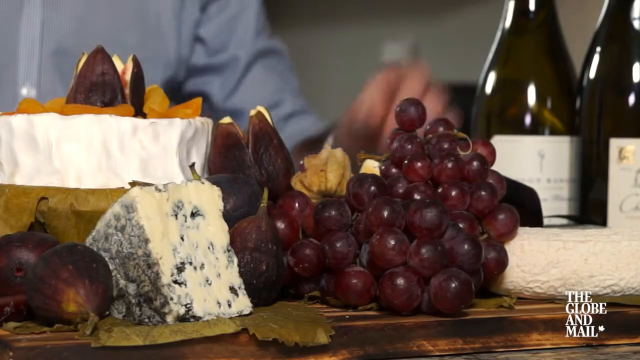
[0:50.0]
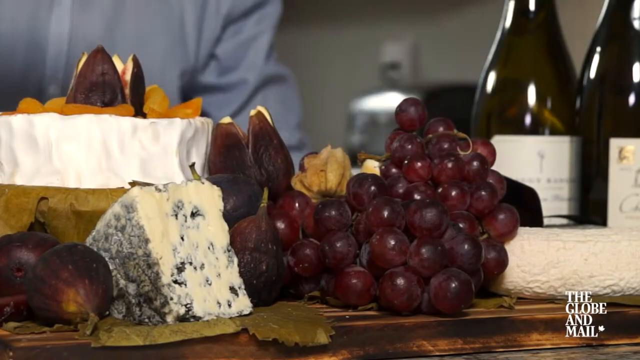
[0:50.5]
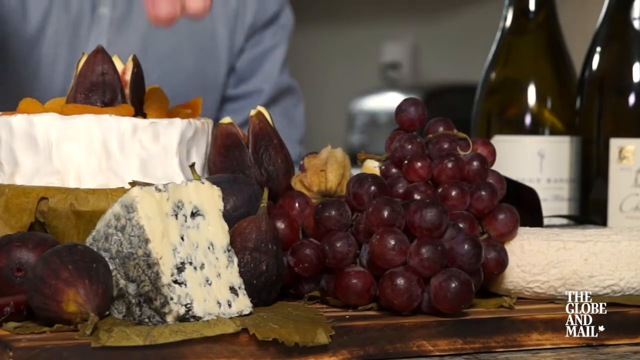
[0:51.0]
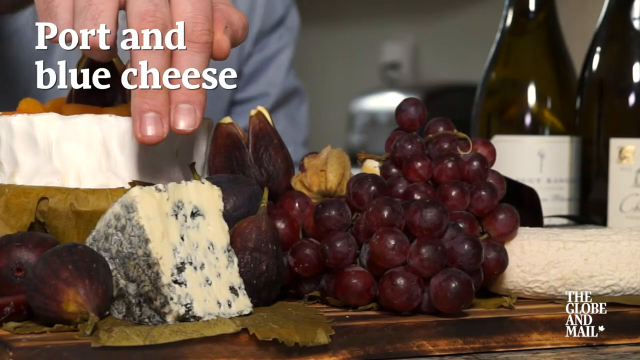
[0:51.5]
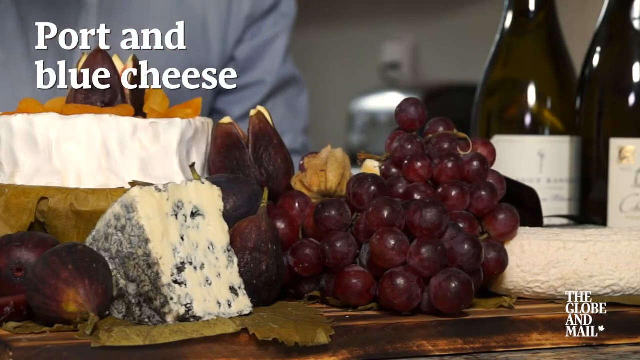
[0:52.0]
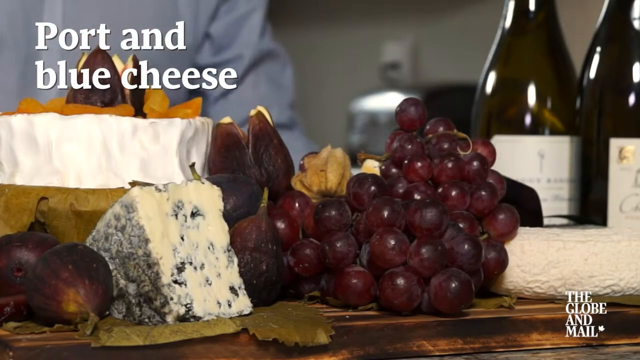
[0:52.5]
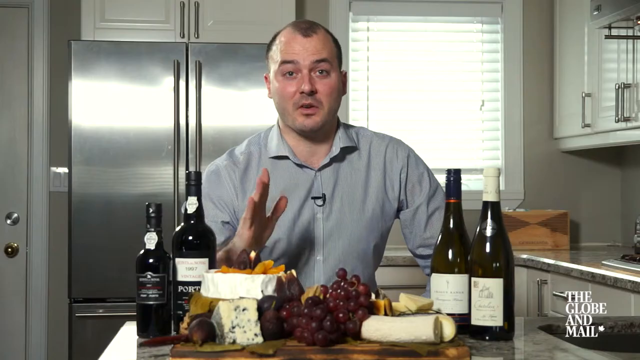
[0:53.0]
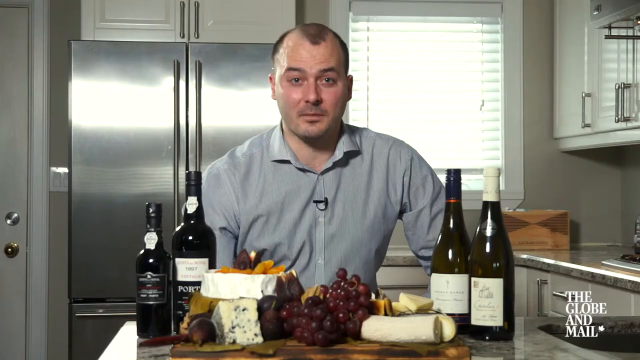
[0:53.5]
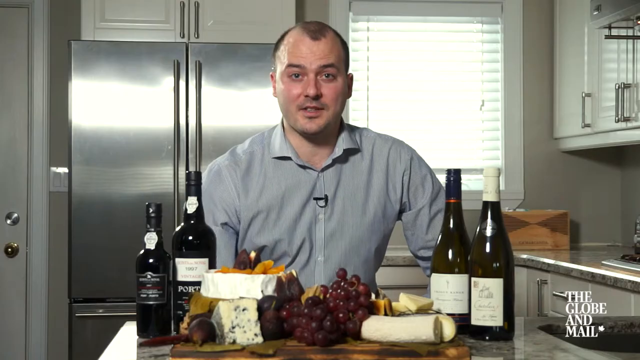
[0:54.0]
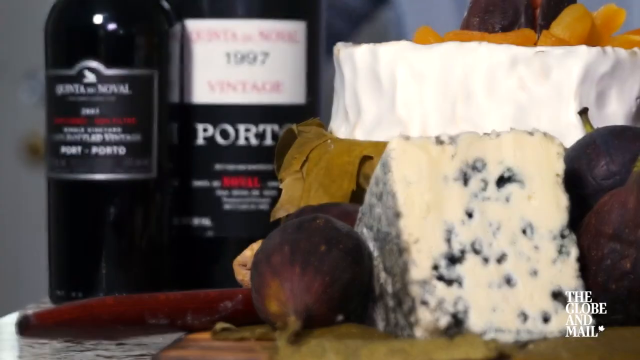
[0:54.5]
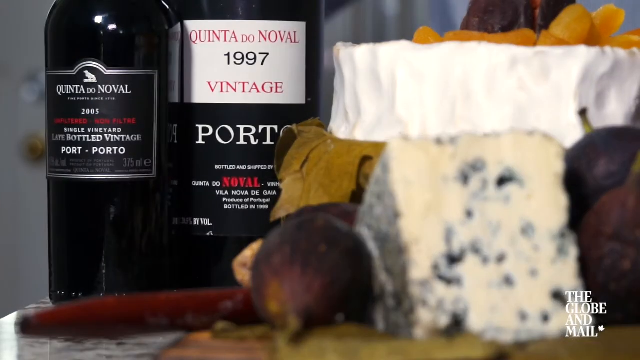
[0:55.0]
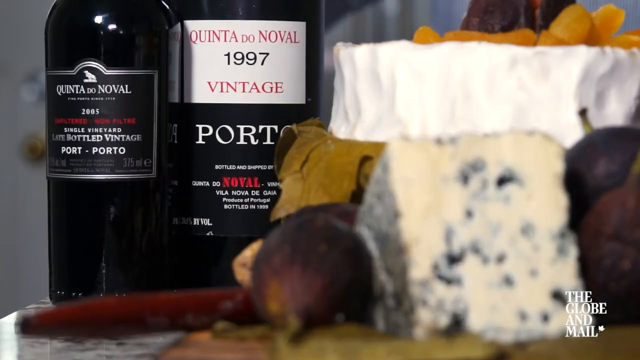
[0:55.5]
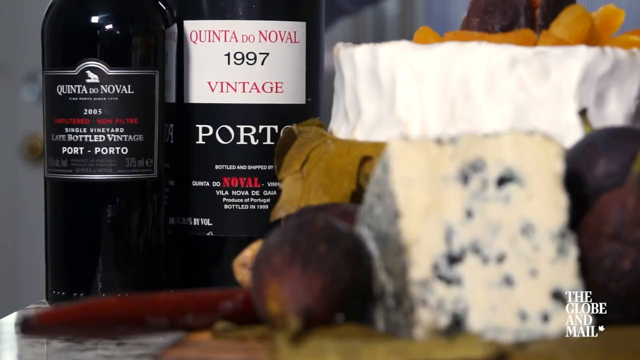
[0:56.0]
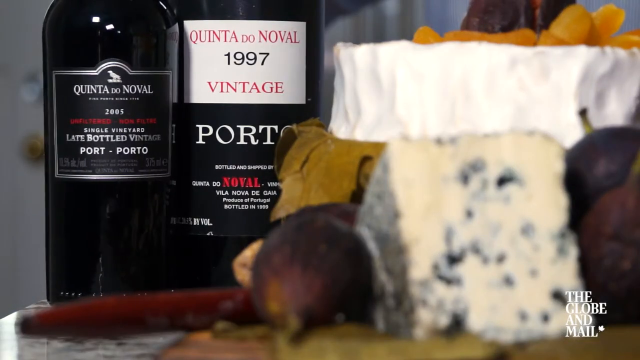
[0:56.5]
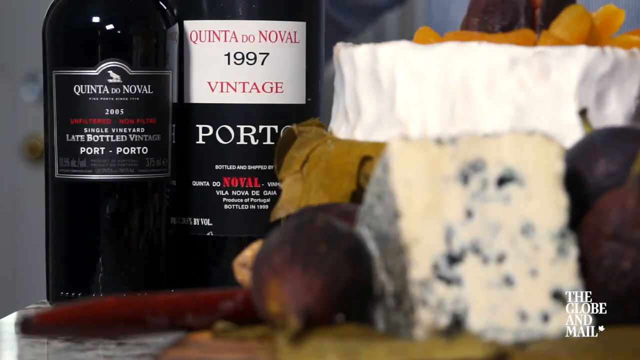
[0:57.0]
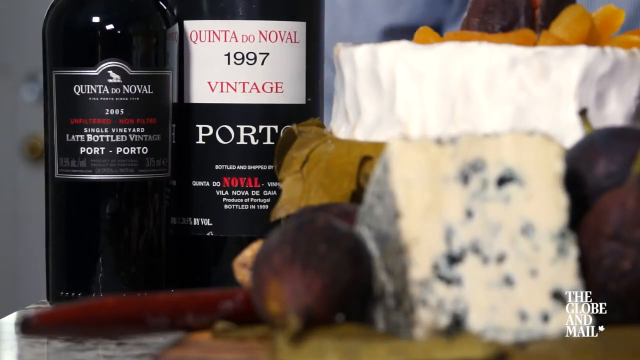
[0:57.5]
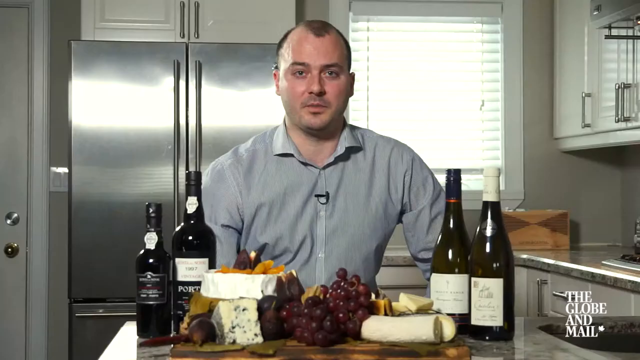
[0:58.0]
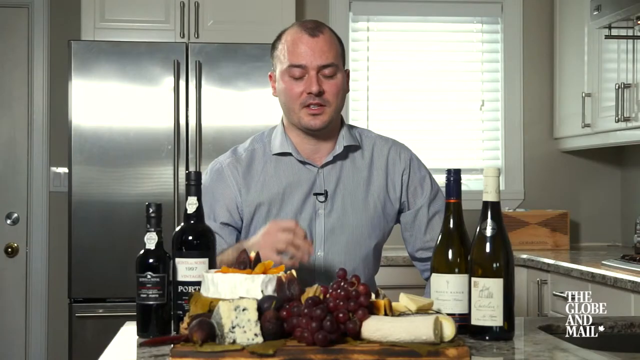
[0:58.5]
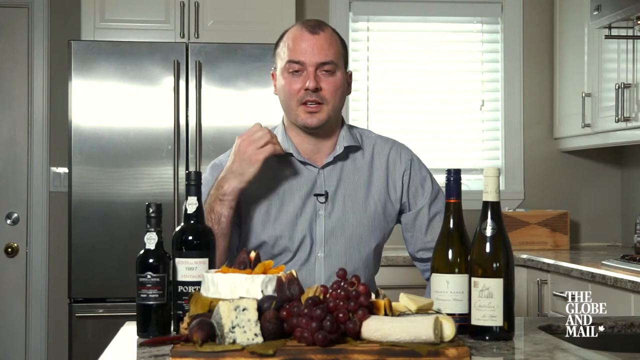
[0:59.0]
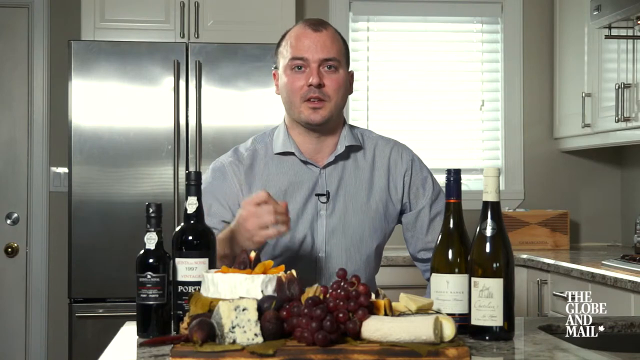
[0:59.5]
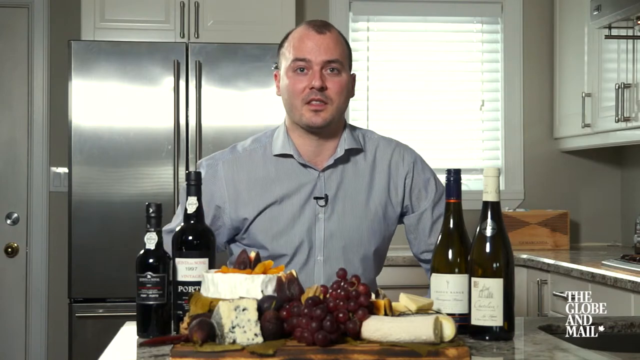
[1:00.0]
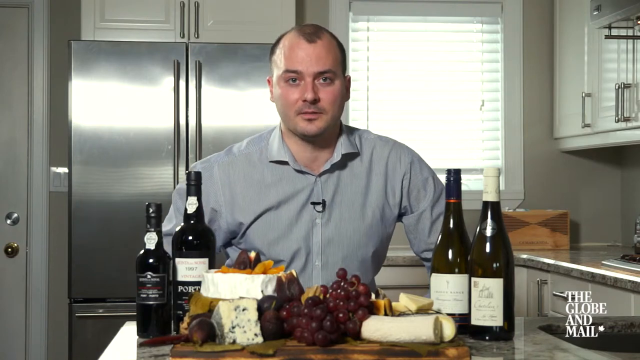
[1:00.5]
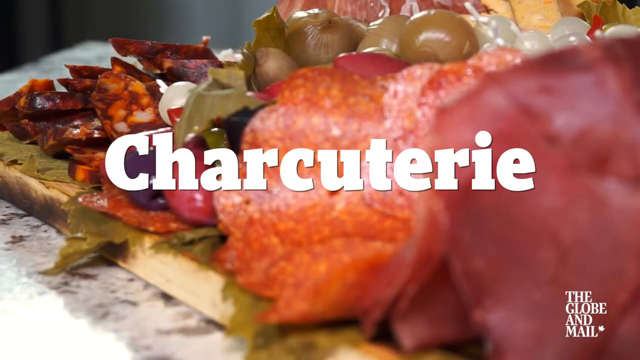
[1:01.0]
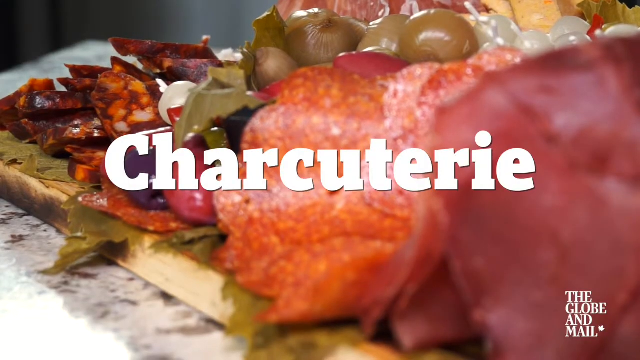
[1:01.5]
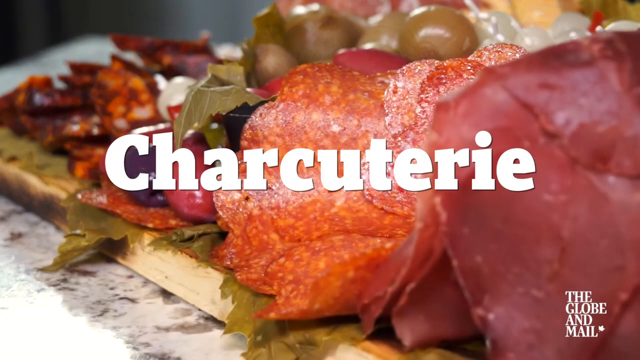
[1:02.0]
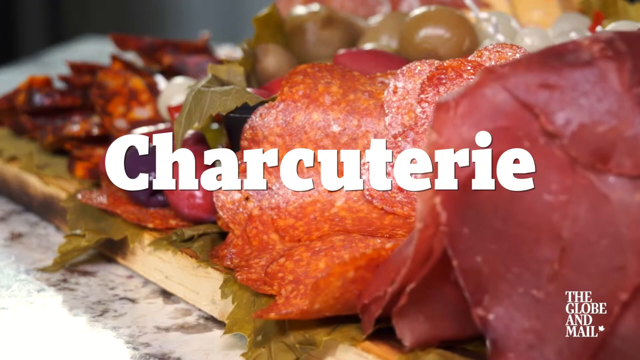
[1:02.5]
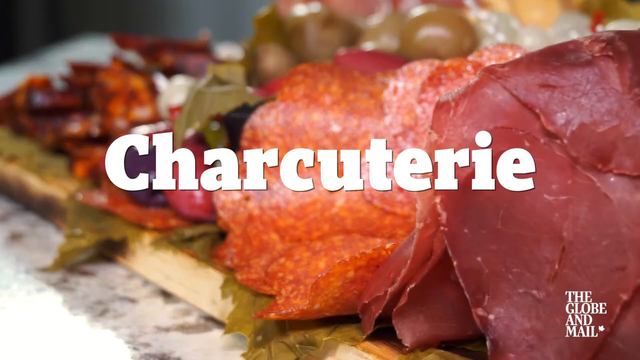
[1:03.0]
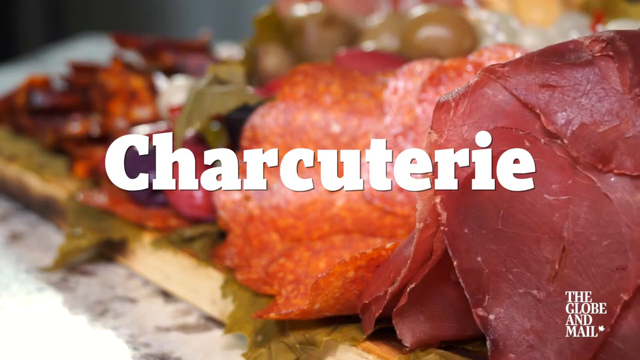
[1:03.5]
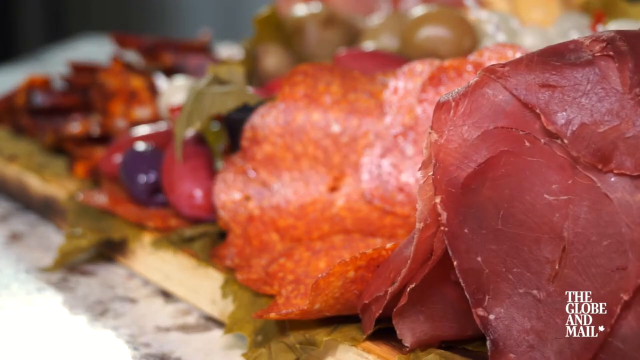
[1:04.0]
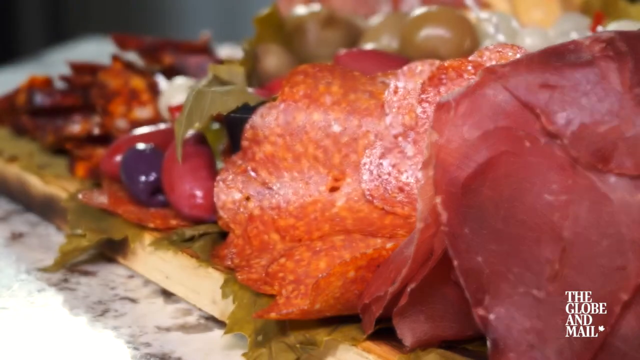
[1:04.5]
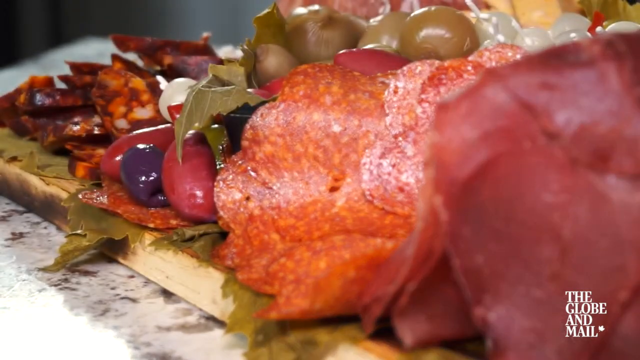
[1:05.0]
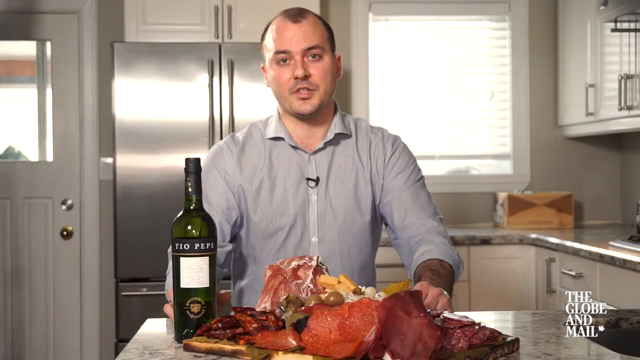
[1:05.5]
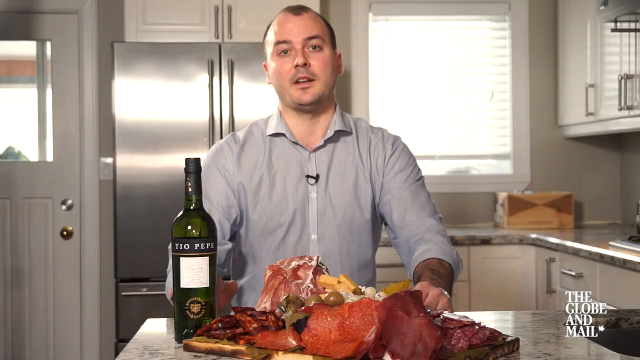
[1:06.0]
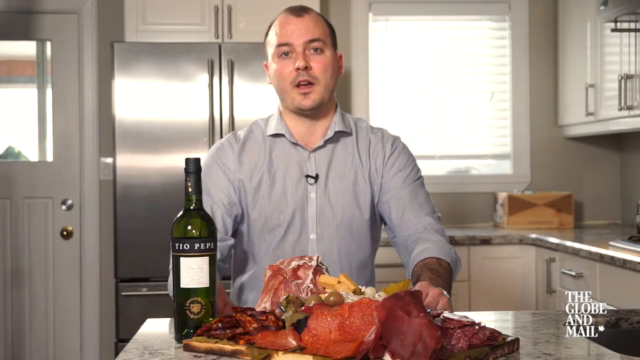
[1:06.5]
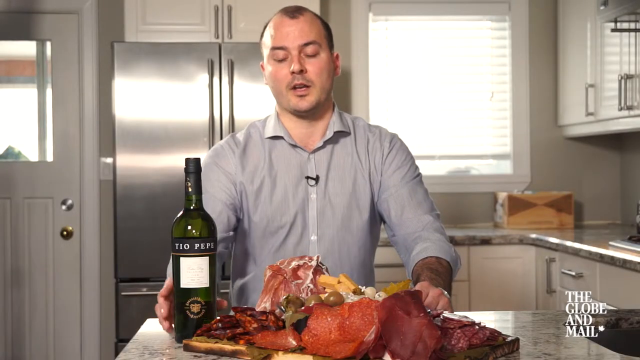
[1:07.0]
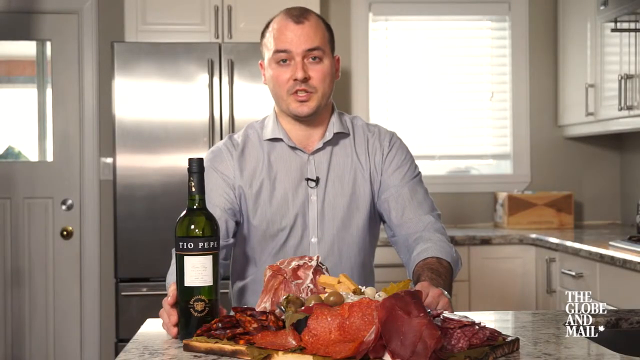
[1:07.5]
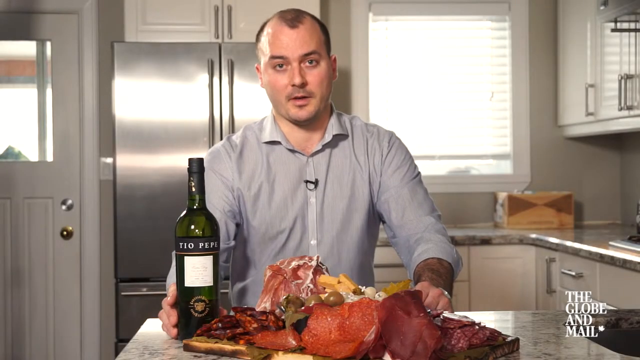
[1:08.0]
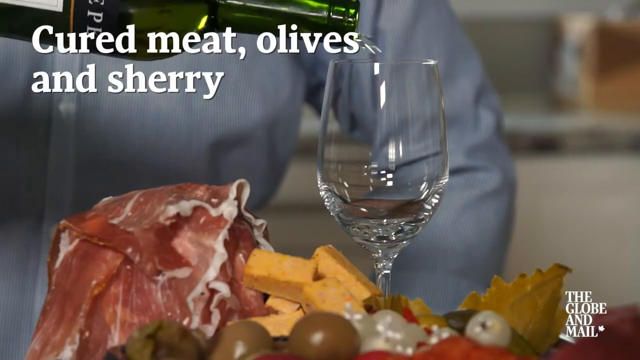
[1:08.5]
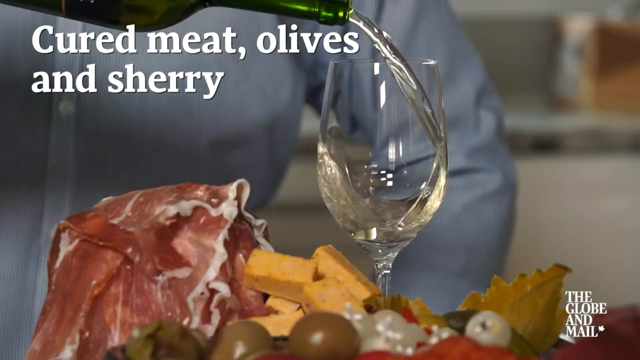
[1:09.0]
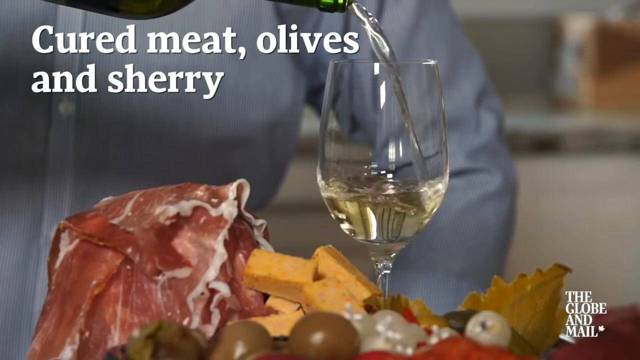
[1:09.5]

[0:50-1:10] The image zooms in on a cherry-colored grape with goat cheese next to it. A gray shirt is visible in the background, and he points with two fingers at the cheese. The cheese is port and blue cheese. He withdraws his finger, the video zooms out, and he gesticulates. The video then zooms in on the labels of the other two bottles, both Quinta Dunova: one has 1997 vintage on its label, and the other is a 2005 single variant late bottle vintage. One bottle is slightly turned to face the camera. Will moves his hand as the video transitions to the text "charcuterie" on the screen, with lots of red on a charcuterie board. Next, a single wine bottle is on the kitchen slab alongside food items, with Will standing behind. Will is wearing a wristwatch, and he touches the wine bottle. The wine is Teal Pepe, and the bottle has a white label.